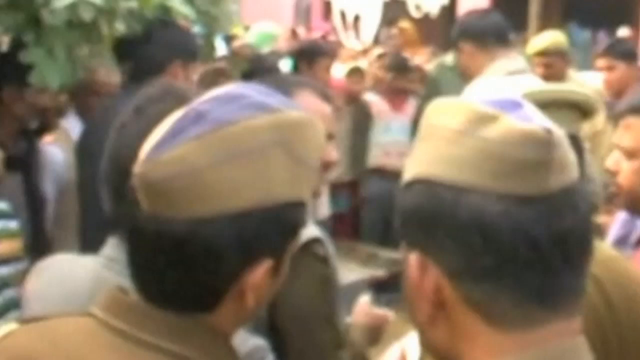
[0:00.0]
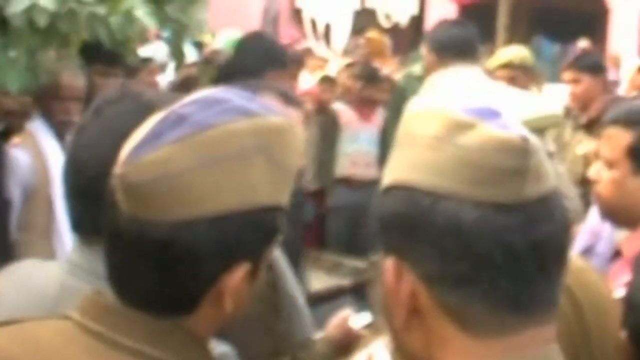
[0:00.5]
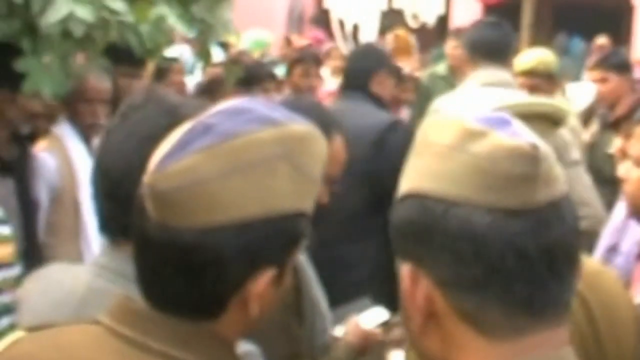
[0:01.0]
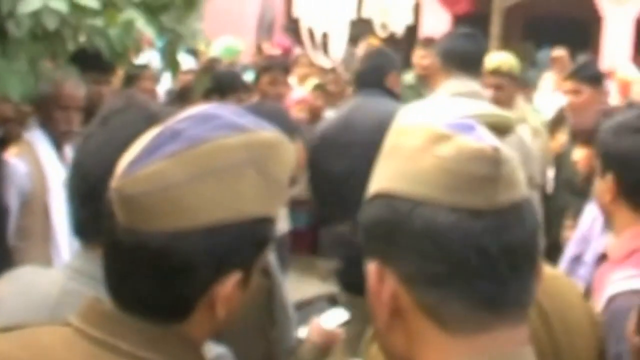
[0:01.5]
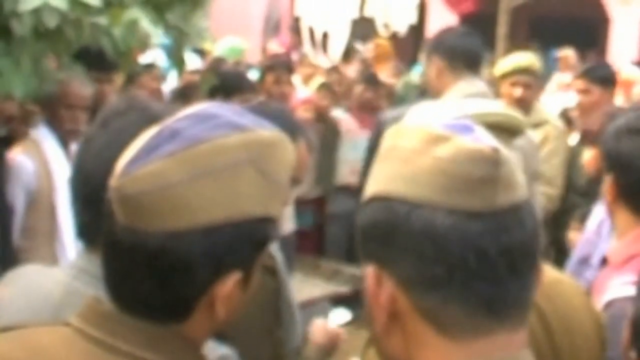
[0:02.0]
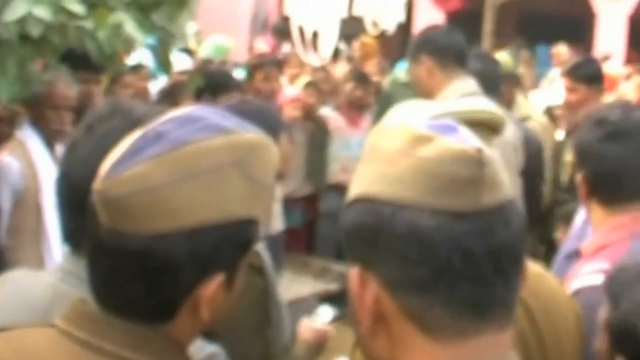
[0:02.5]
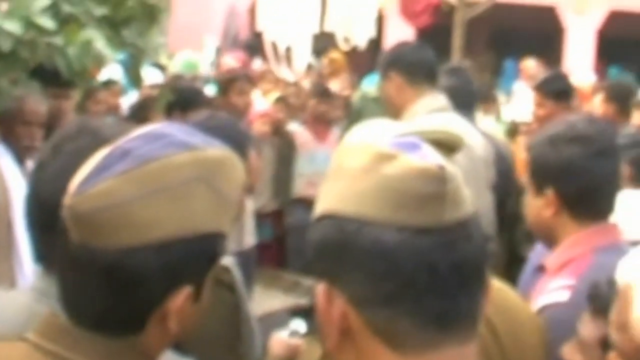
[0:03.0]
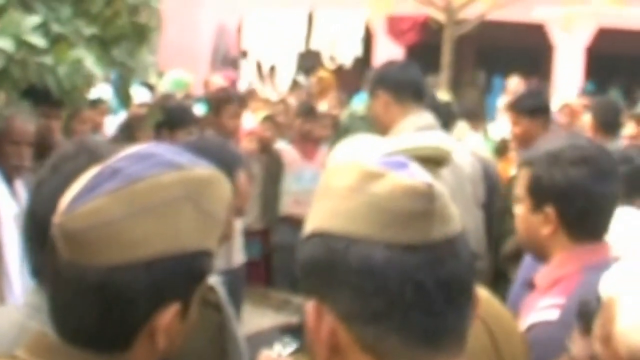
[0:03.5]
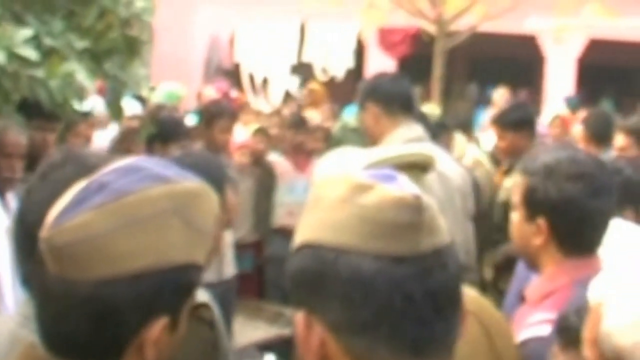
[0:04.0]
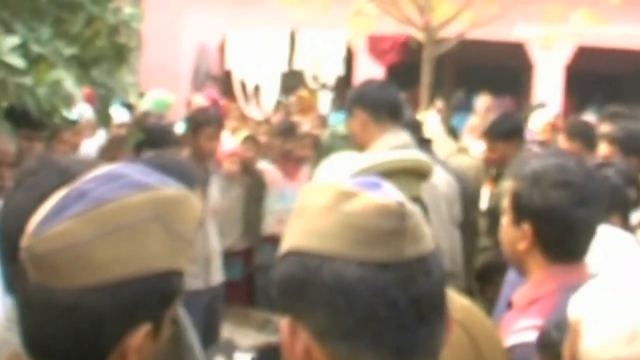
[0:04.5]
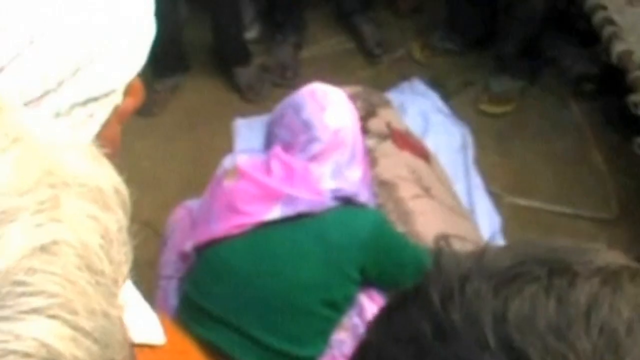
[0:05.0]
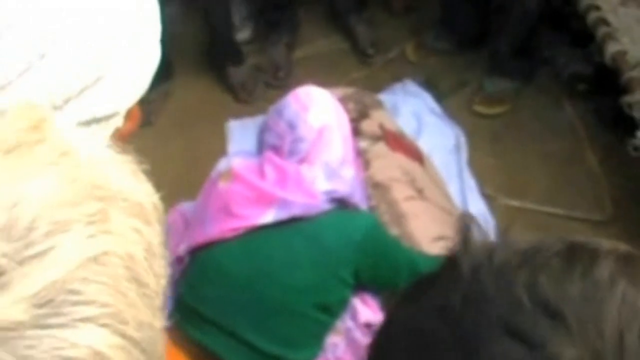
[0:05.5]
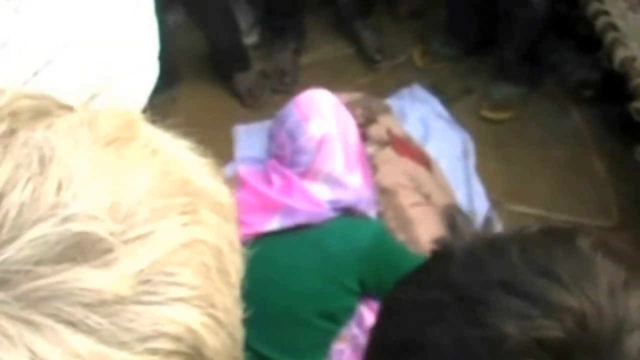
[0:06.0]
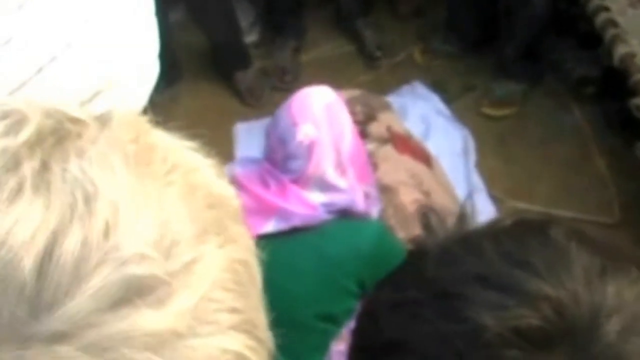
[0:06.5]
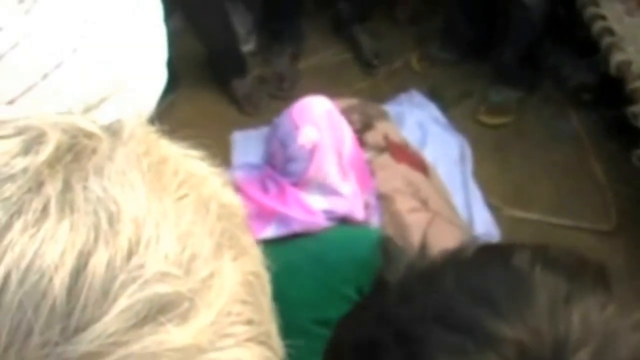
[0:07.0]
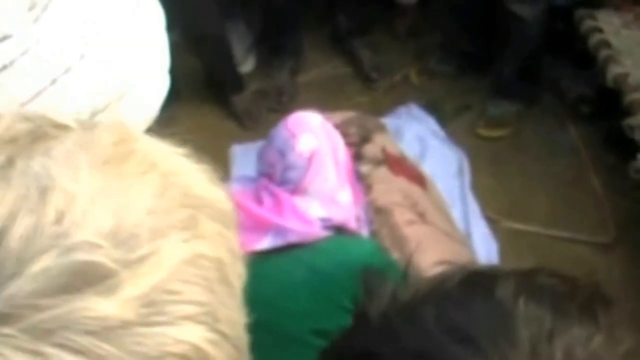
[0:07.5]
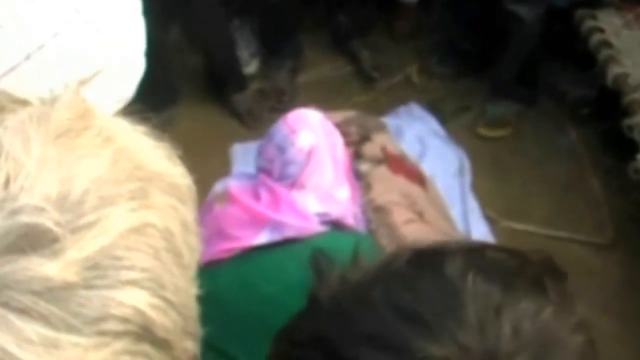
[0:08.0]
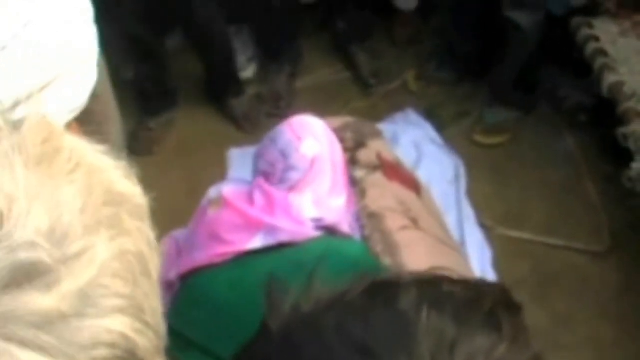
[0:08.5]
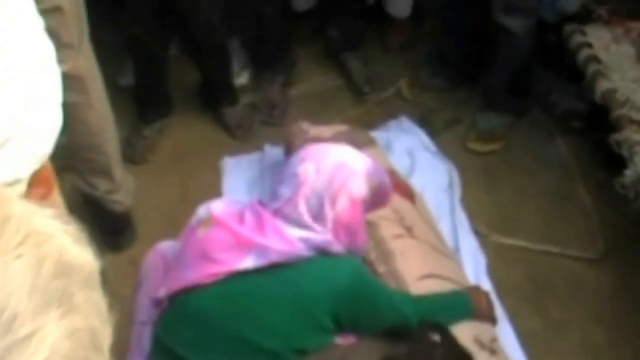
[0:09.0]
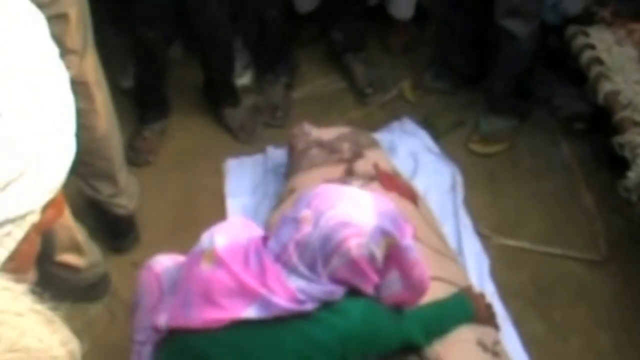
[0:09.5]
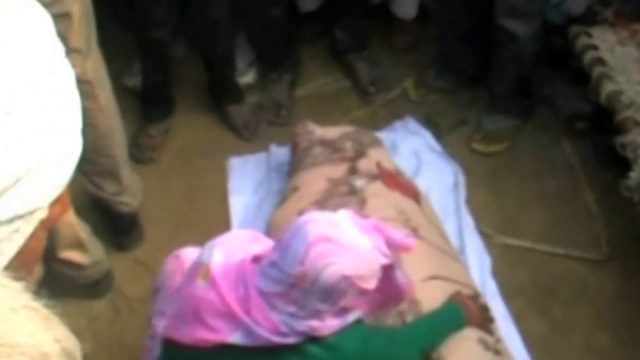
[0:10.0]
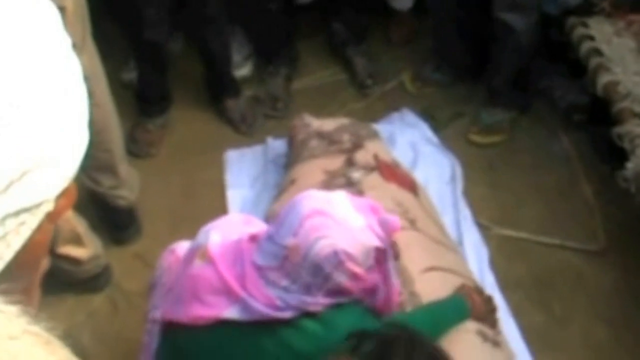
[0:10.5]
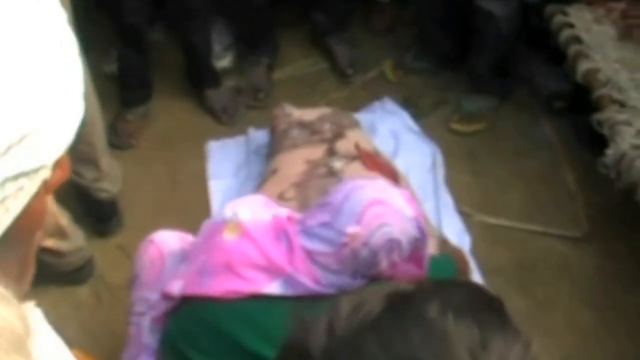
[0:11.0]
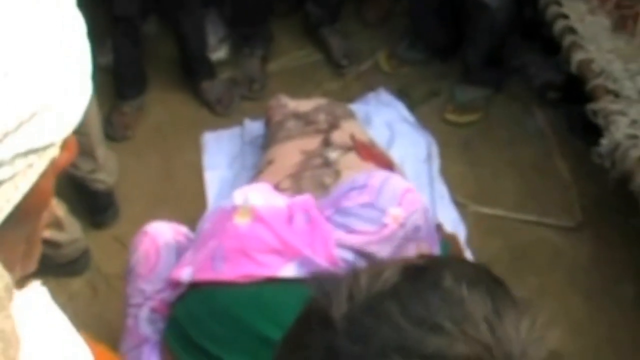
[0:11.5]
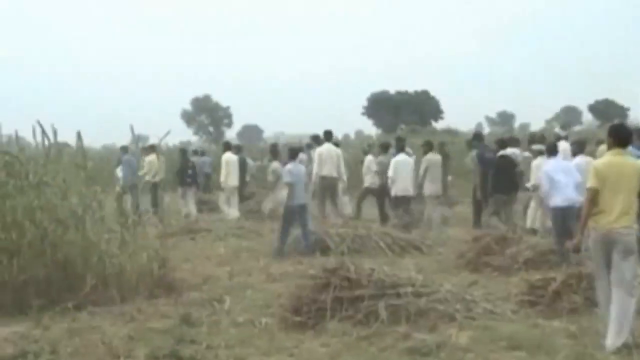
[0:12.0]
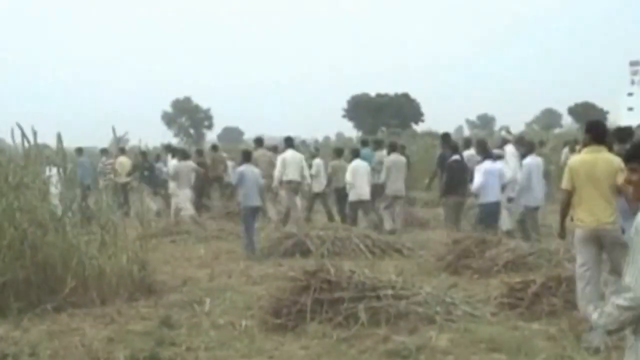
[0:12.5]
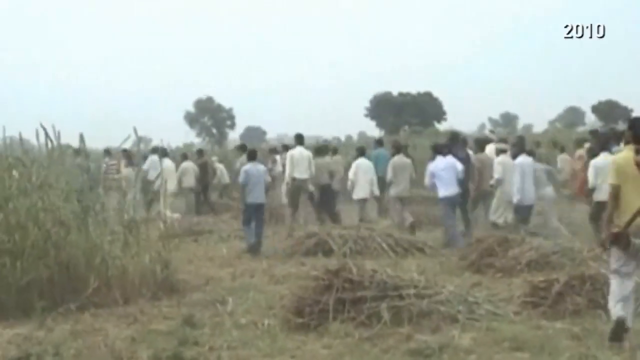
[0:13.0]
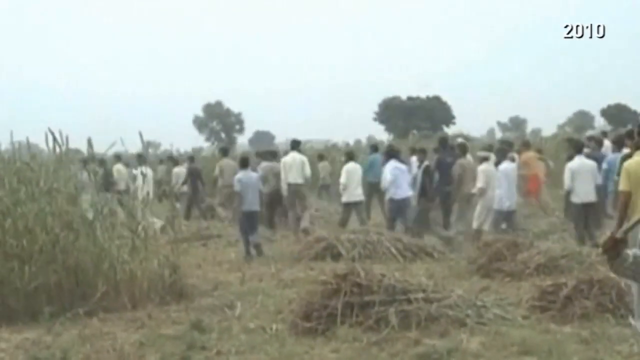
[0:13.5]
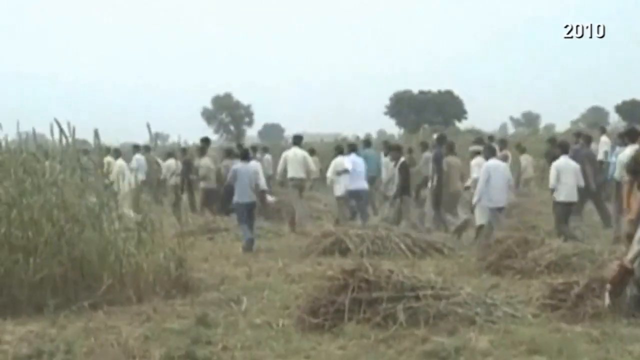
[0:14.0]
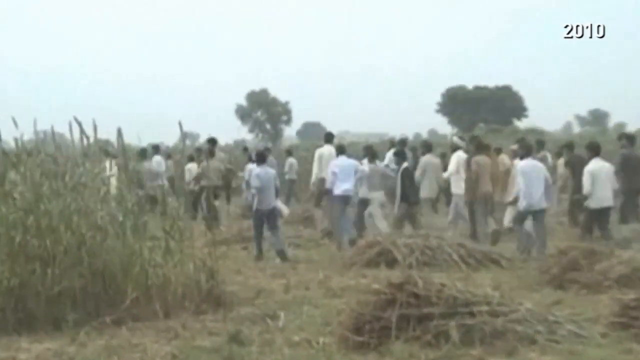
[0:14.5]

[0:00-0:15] This appears to be a documentary about a tiger attack somewhere in a third world country. A woman mourns over a dead body, probably of someone killed by a tiger. Villagers run across a field toward an animal that cannot be seen. The mourning woman wears a pink Muslim head covering and looks very distraught, though her face is not visible. The footage is from 2010. Government officials in brown military uniforms are standing around. The situation seems to involve a predatory, dangerous tiger.